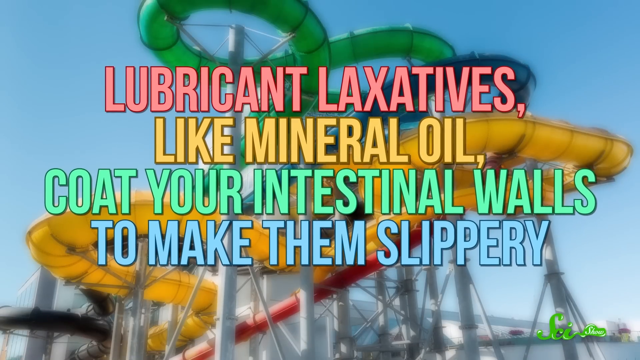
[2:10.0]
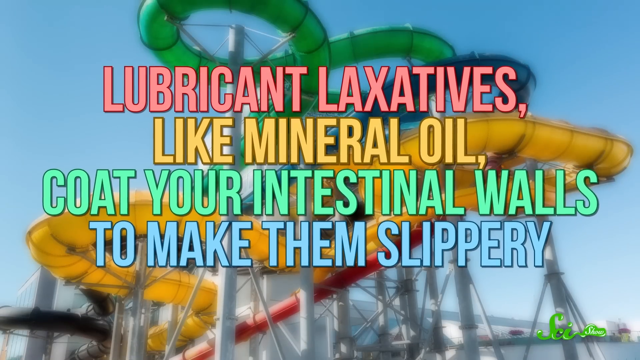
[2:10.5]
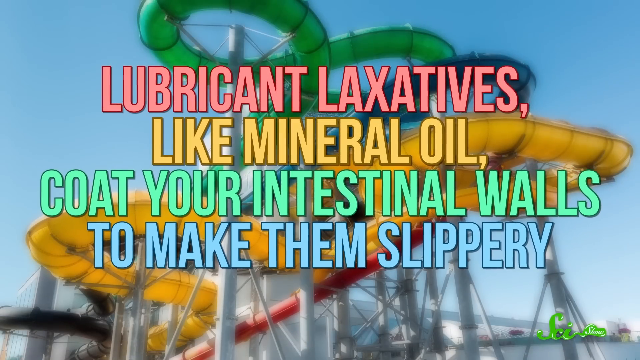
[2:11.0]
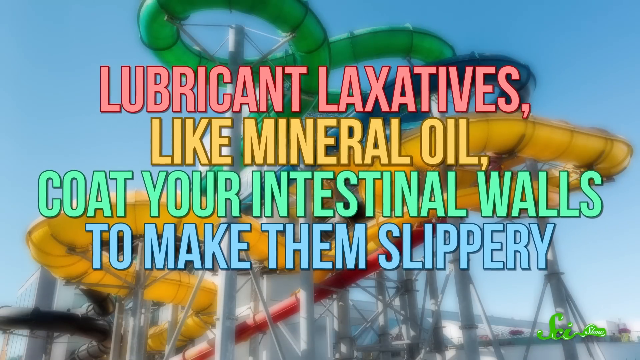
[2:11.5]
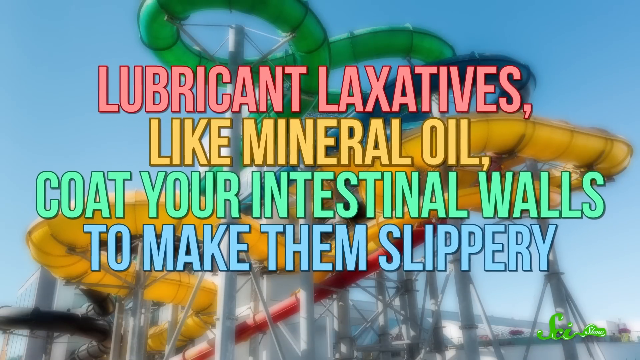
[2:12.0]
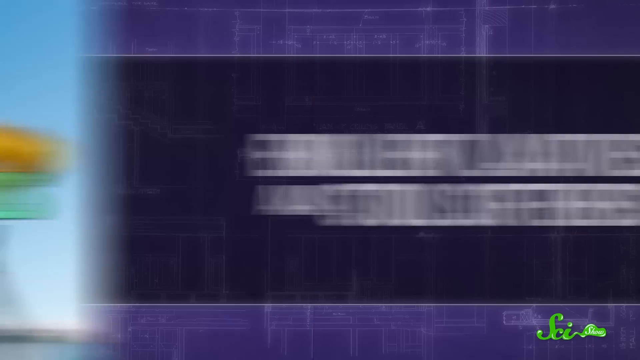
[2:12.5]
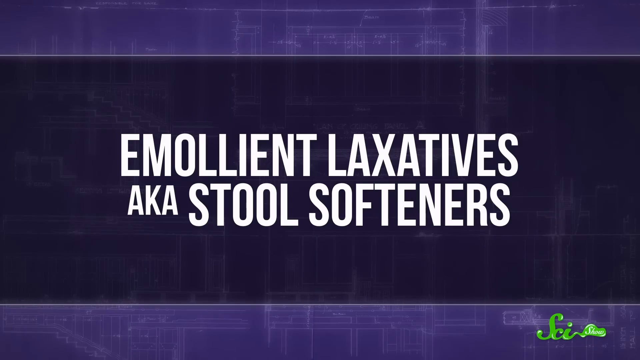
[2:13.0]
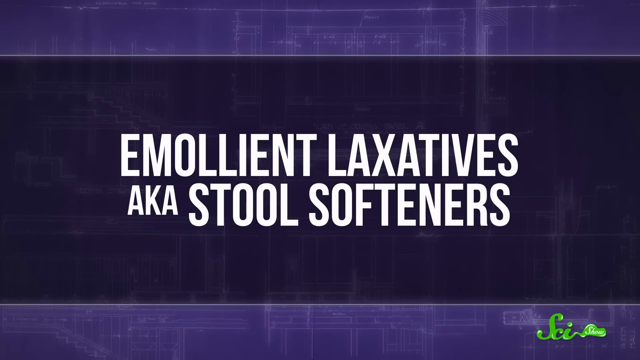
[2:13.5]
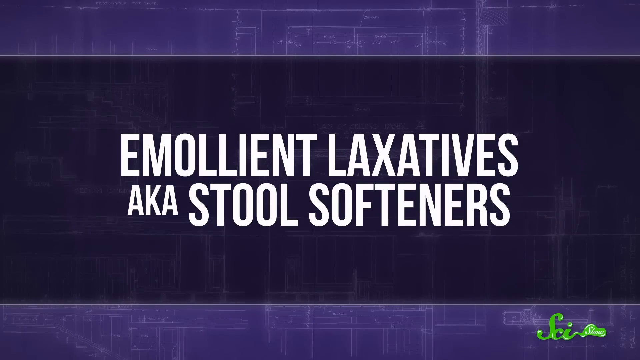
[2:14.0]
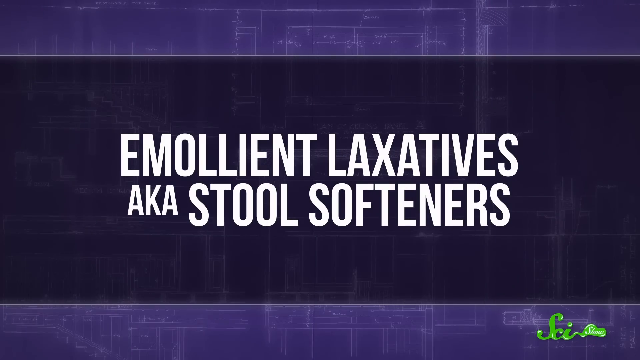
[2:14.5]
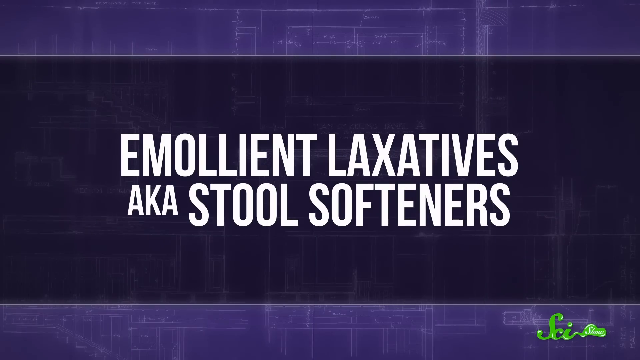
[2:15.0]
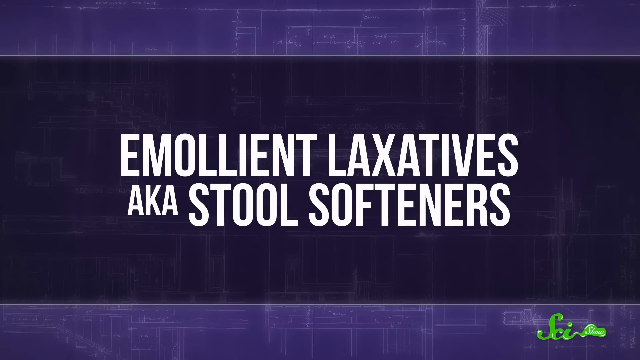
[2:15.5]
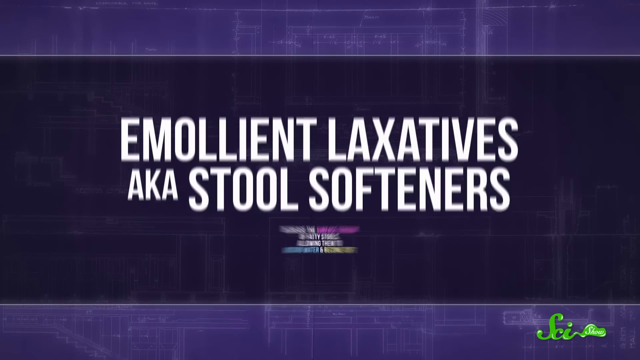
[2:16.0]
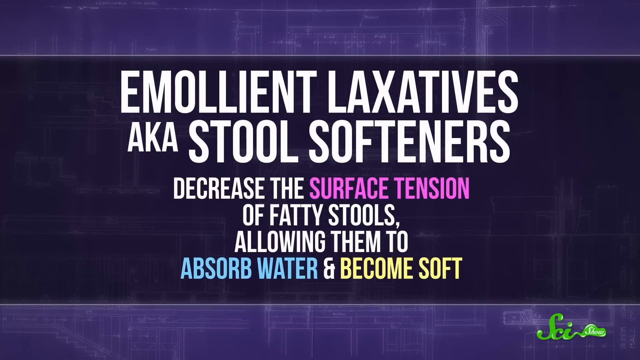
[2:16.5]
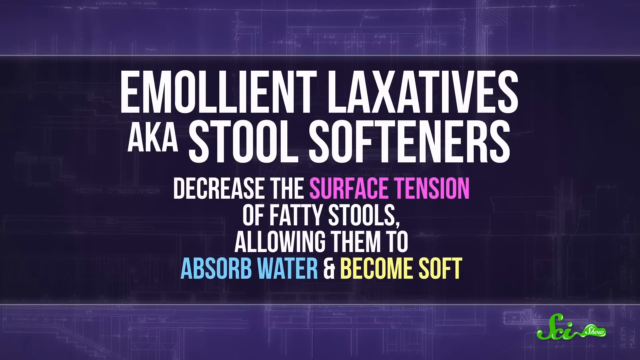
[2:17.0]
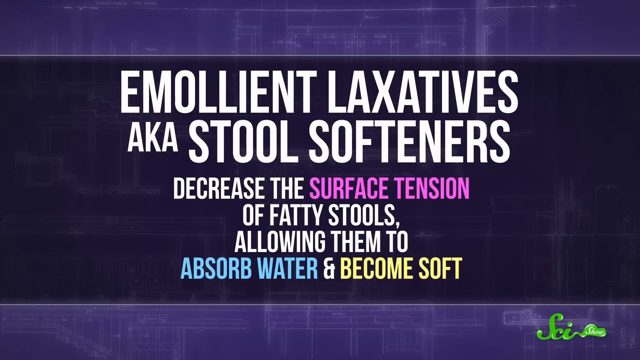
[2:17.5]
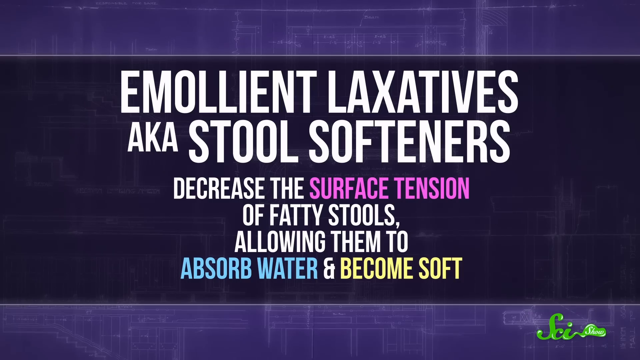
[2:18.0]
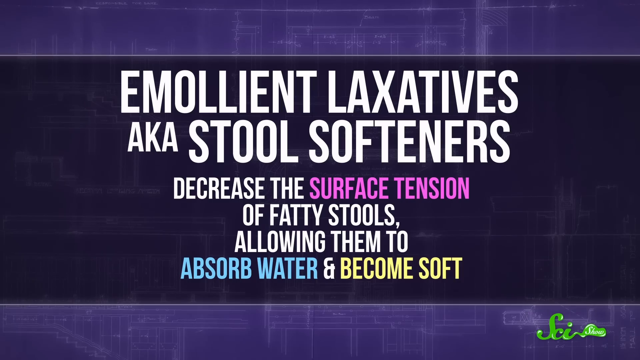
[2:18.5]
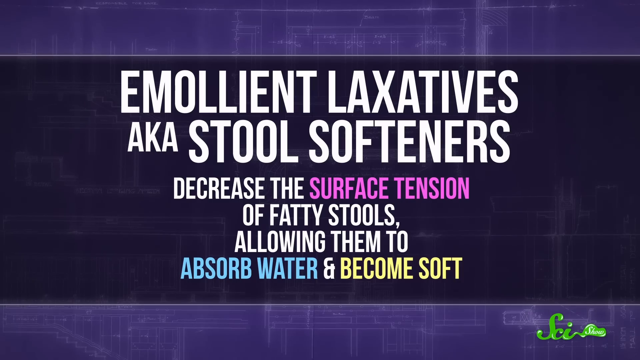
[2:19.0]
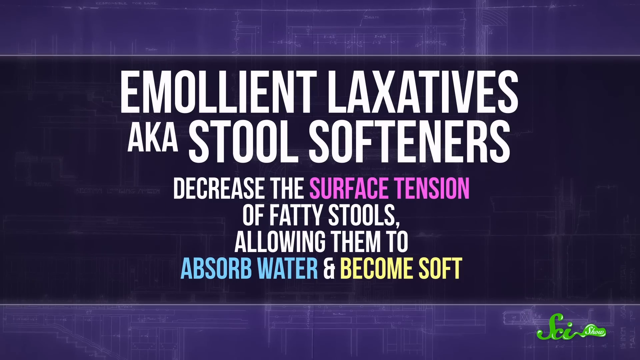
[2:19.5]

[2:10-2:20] On-screen text reads "lubricant laxatives like mineral oil coat your intestinal walls to make them slippery" and "Emollient laxatives aka stool softeners decrease the surface tension of fatty stools allowing them to absorb water and become soft."